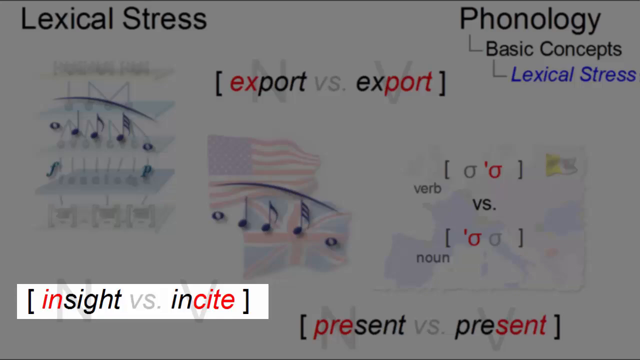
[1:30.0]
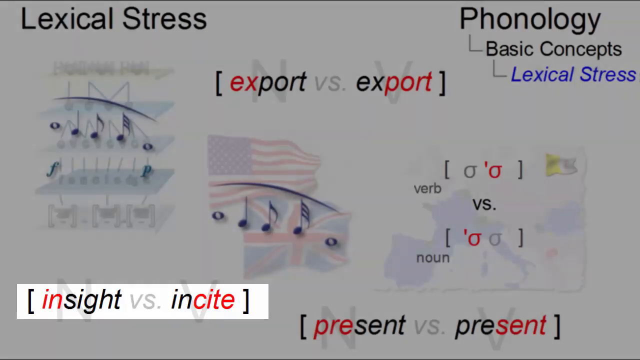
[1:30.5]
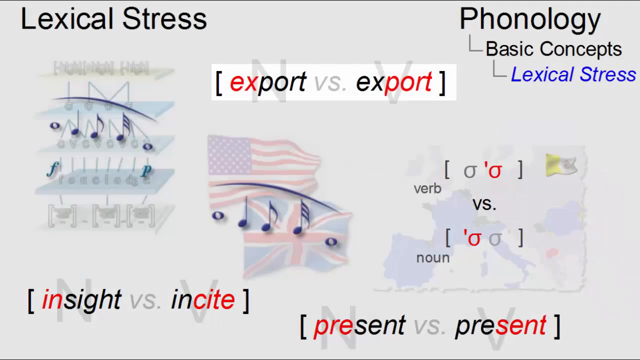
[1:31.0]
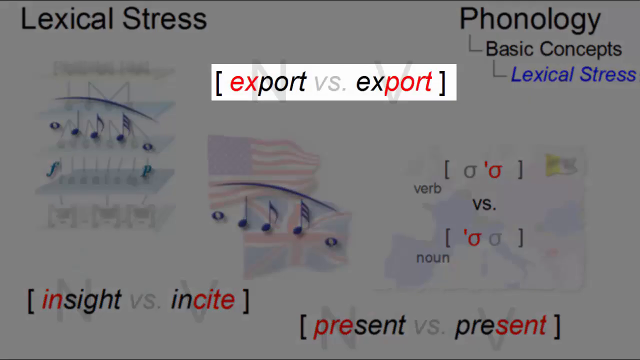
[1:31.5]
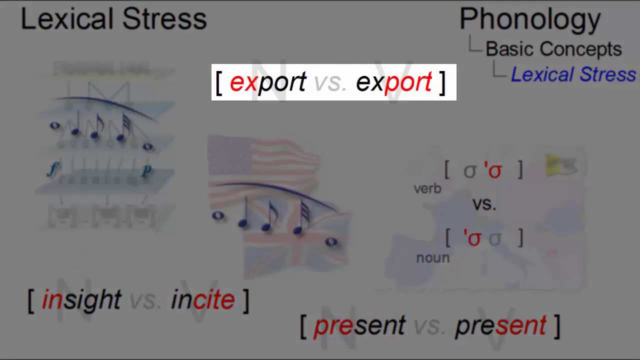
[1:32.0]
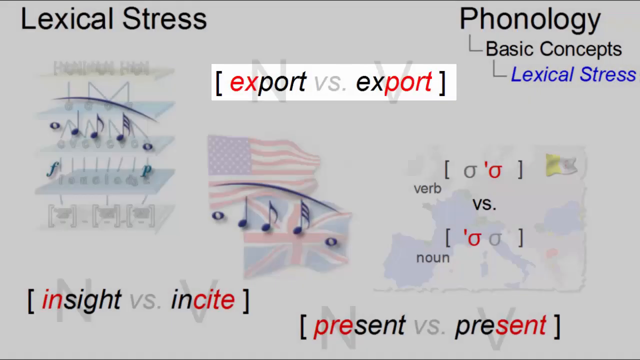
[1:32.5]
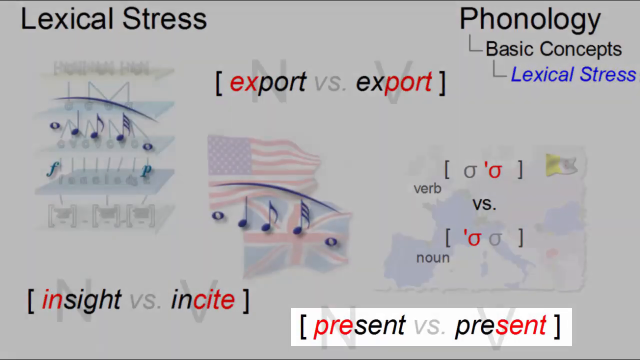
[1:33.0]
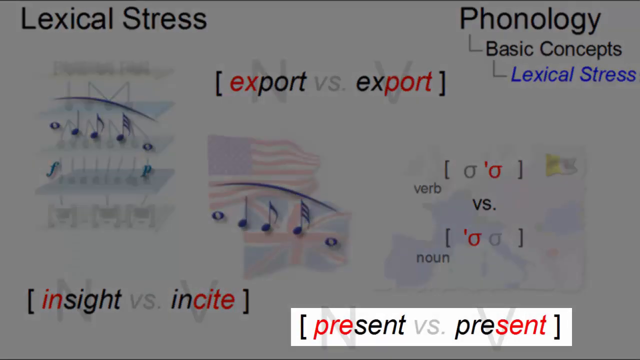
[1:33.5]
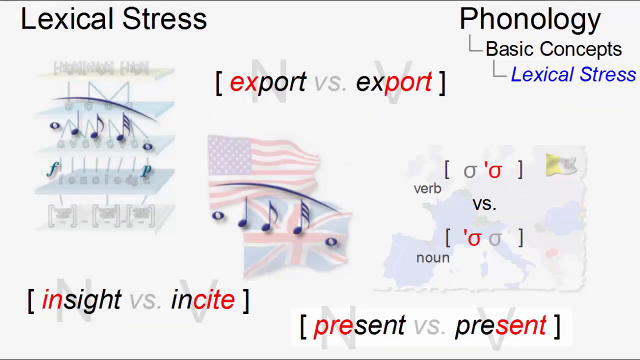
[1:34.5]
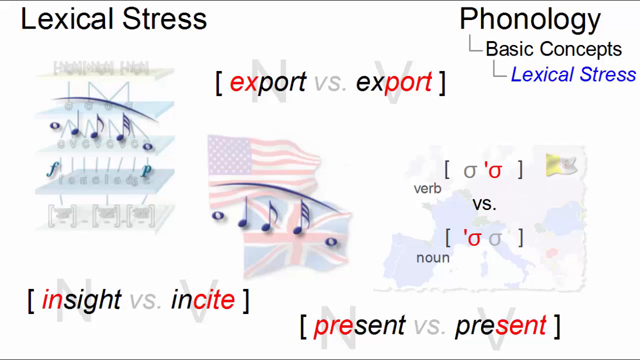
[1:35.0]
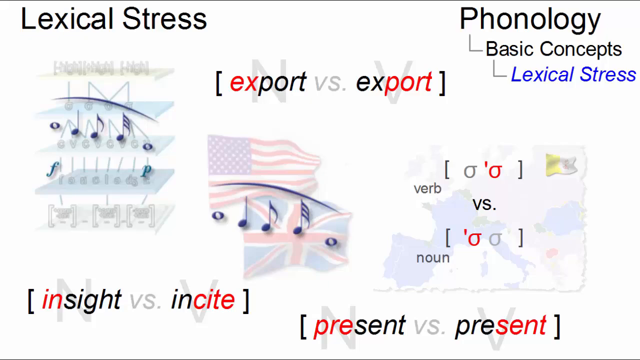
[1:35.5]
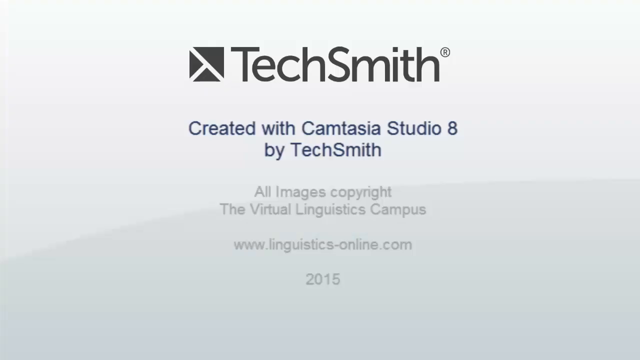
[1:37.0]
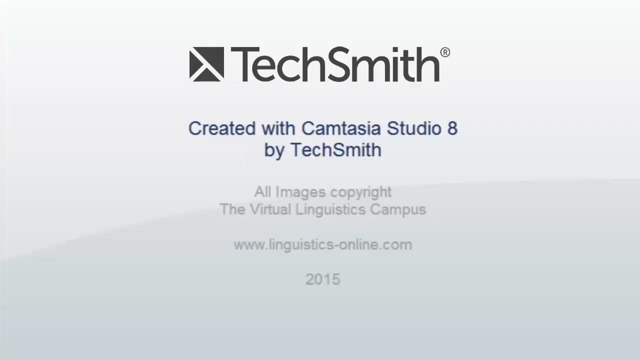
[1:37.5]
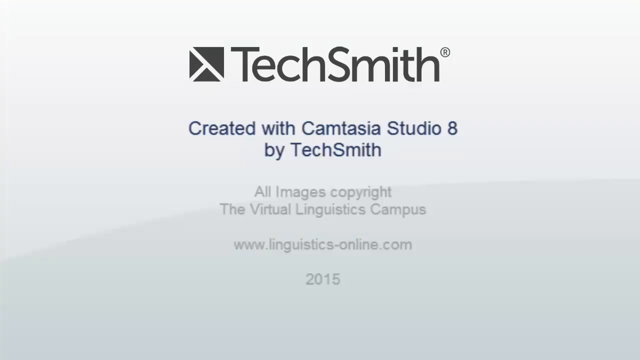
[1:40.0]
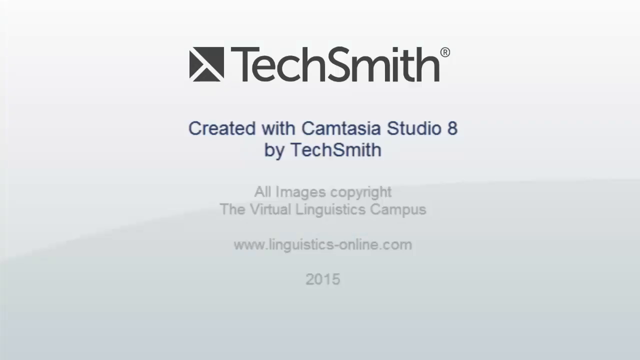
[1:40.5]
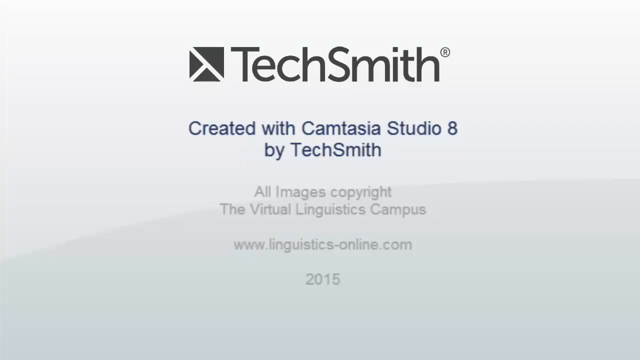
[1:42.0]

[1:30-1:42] "Lexical stress" is still written at the top left and "phonology" at the top right of the screen, with "basic concepts" under it and "lexical stress" under that on a blue card. "Export" versus "export" is shown, one marked noun and the other marked verb, showing that emphasizing the first part of the word makes it a noun and emphasizing the last part makes it a verb. "Present" and "present" and "inside" and "inside" are also shown. A credit shows it was created by TechSmith in 2015.